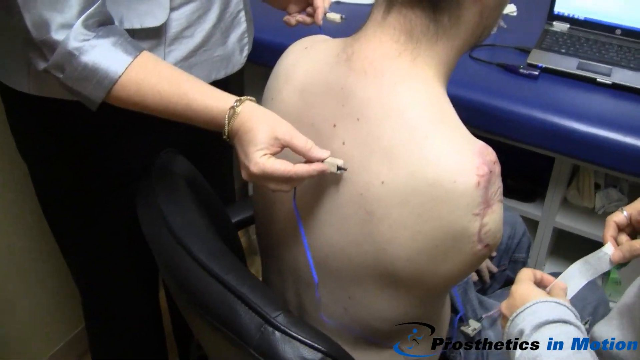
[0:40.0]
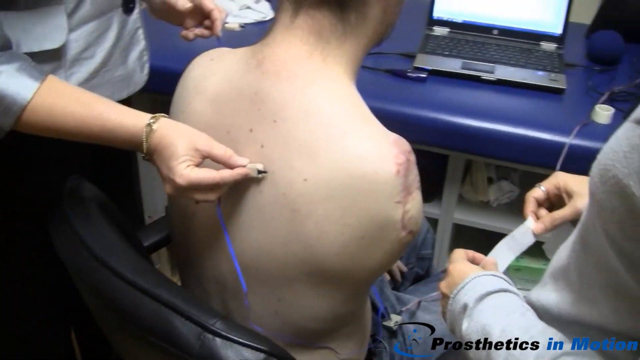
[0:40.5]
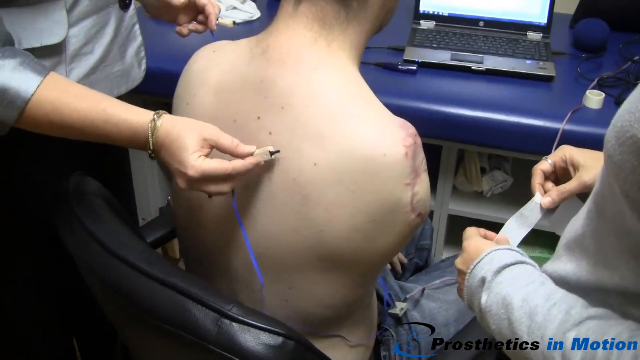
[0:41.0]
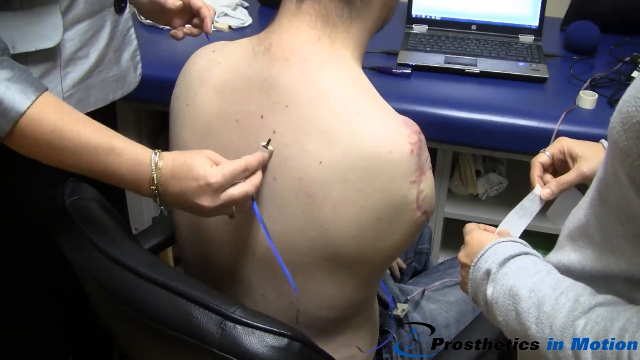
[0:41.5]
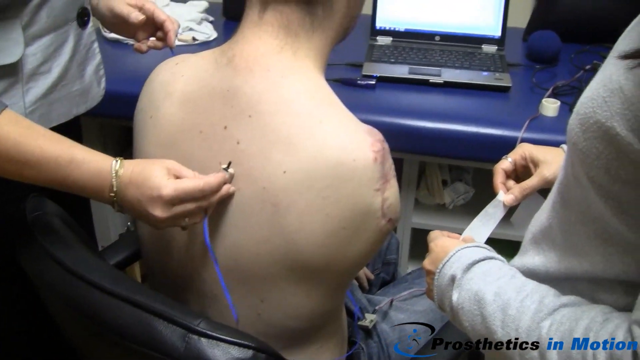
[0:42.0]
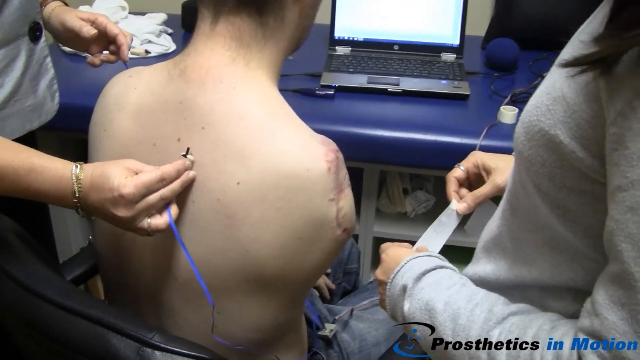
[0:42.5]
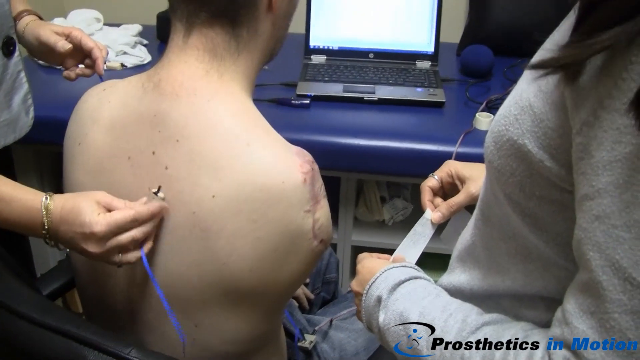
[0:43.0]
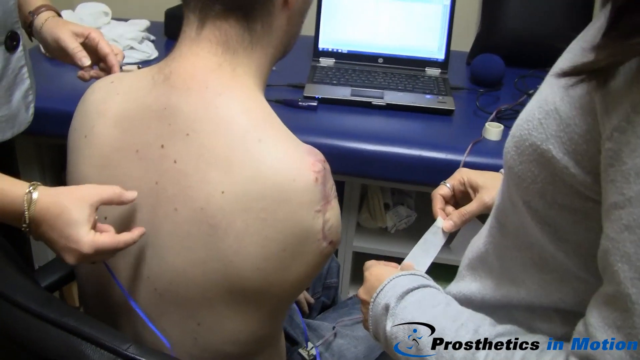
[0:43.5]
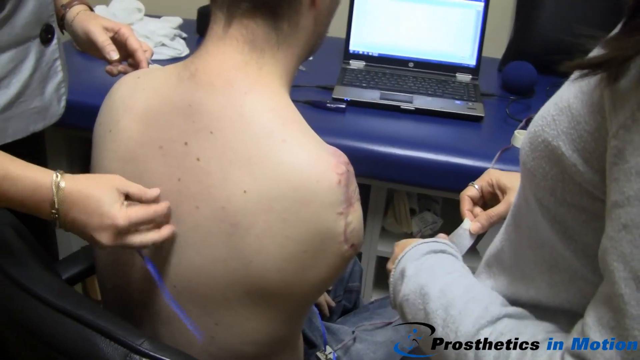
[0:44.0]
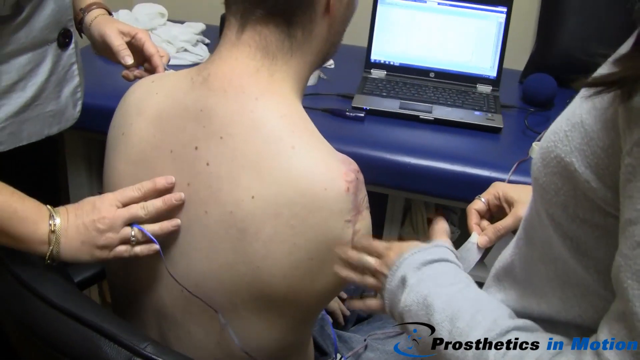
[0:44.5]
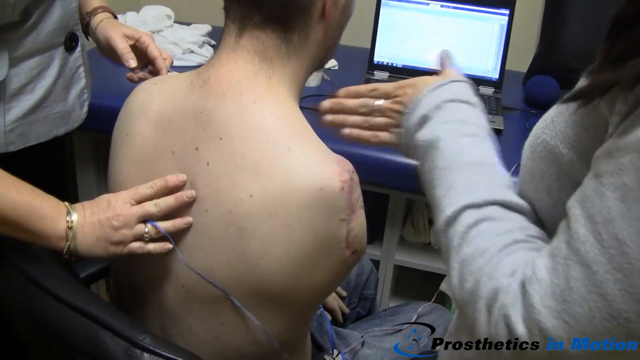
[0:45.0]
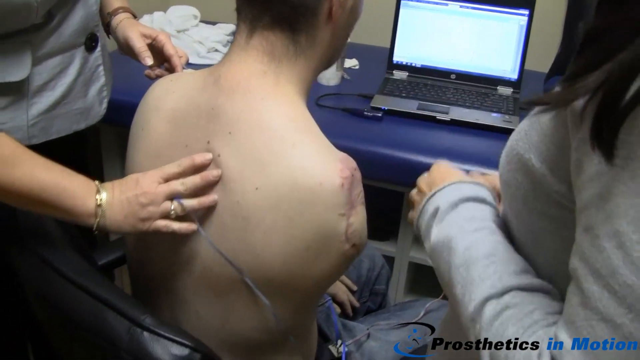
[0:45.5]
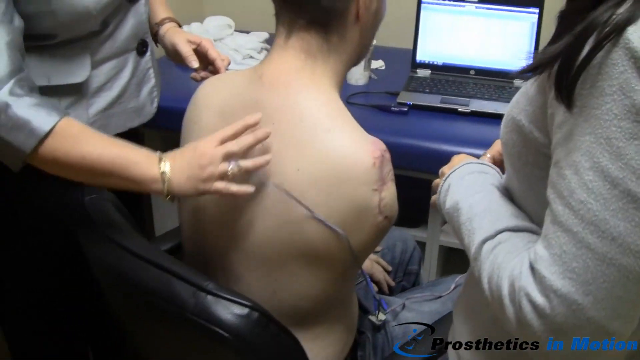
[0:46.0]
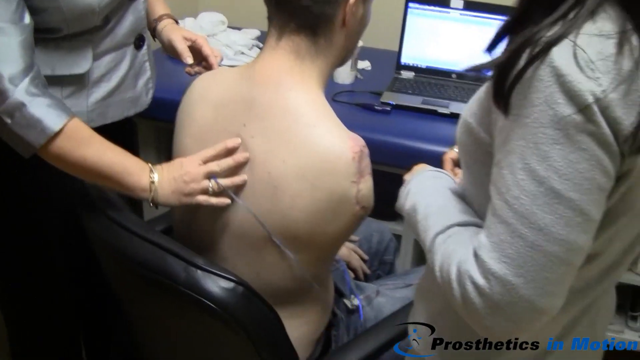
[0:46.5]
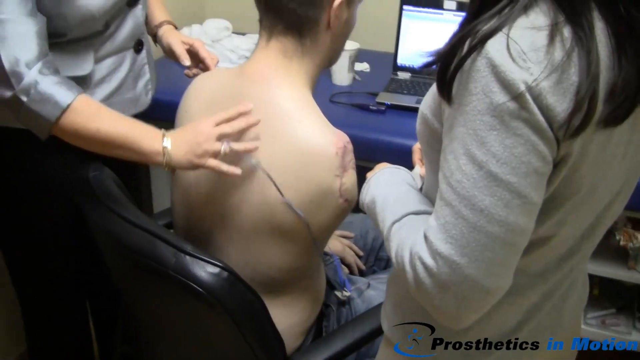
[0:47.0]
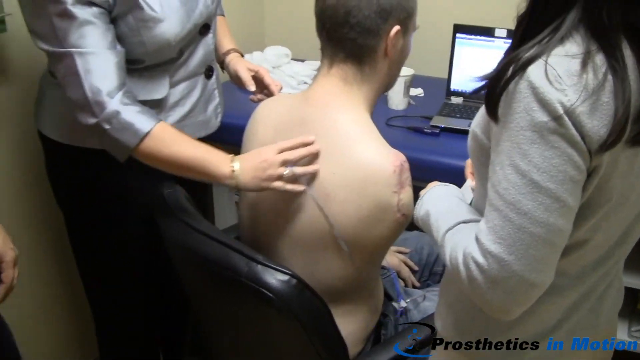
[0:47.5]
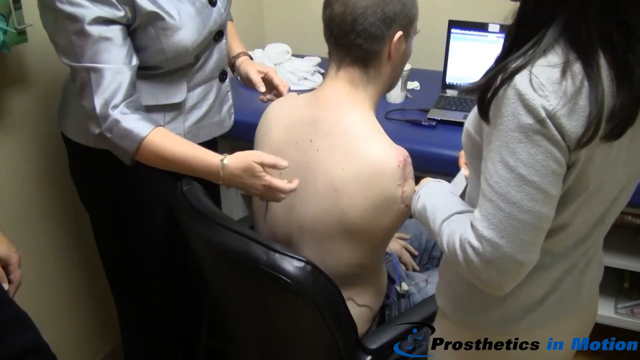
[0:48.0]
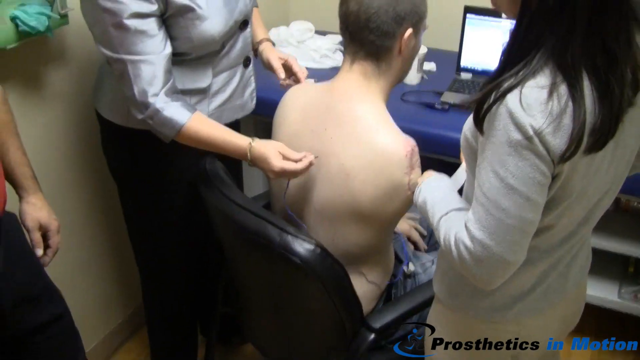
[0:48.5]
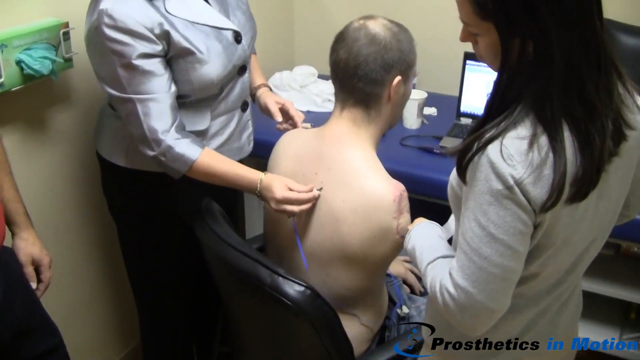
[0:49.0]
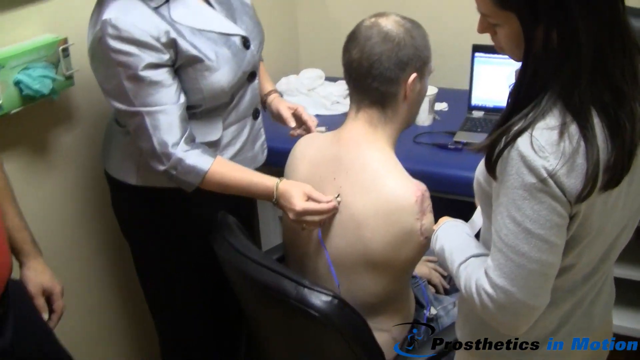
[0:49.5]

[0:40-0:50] The man with the arm amputation at the right shoulder blade sits on a chair in the doctor's office. The woman, wearing a silver jacket, holds in her right hand an electrode-type item connected to a blue wire and moves it in the gap between the man's spine and shoulder blade. She then places it in an upright position and moves it up and down the area of his spine. She uses her thumb and finger to measure a gap, then places her fingertips in this area in an upwards motion several times.